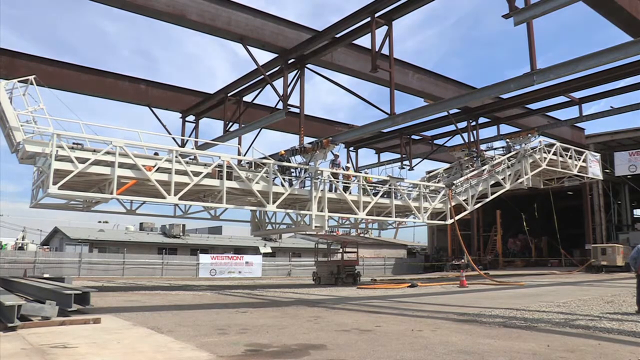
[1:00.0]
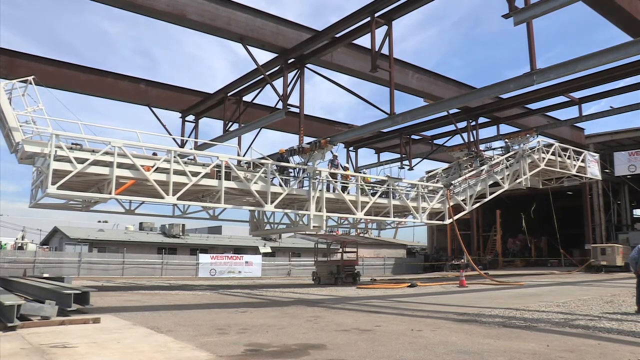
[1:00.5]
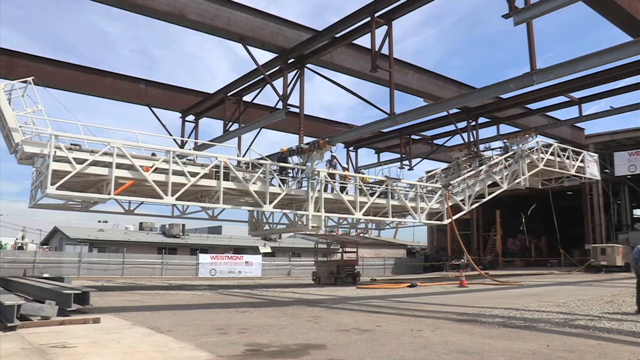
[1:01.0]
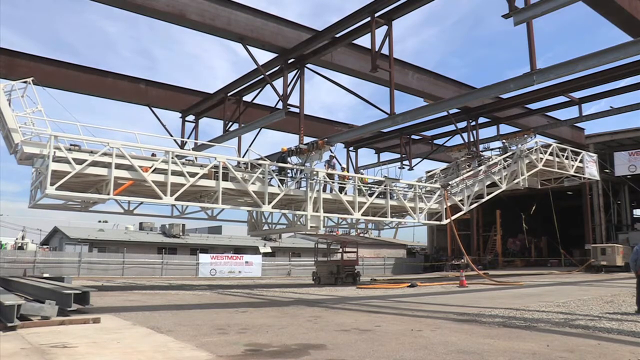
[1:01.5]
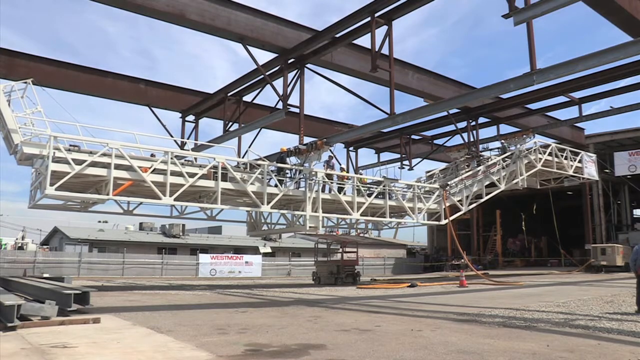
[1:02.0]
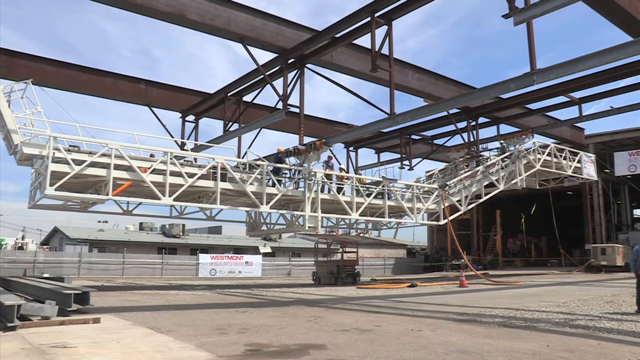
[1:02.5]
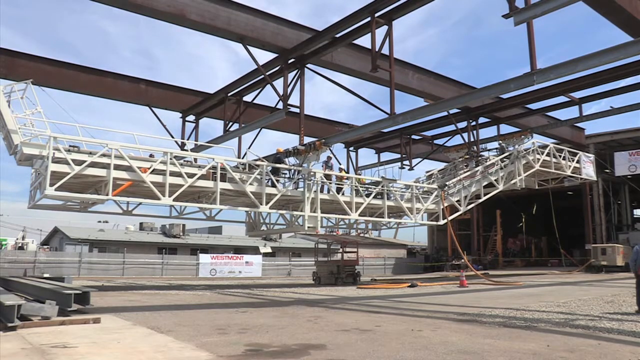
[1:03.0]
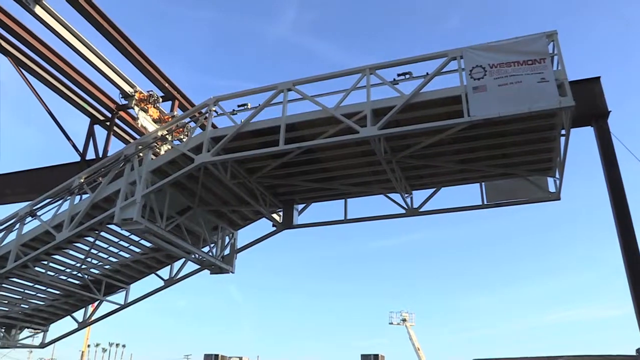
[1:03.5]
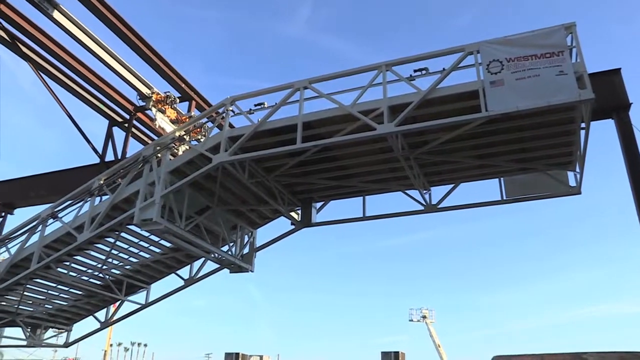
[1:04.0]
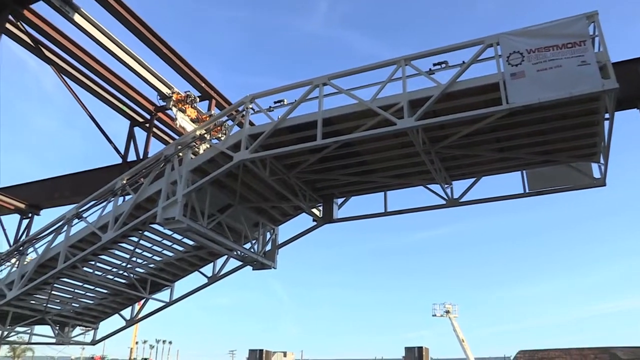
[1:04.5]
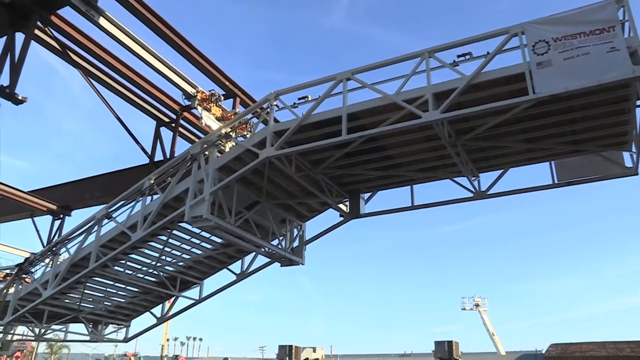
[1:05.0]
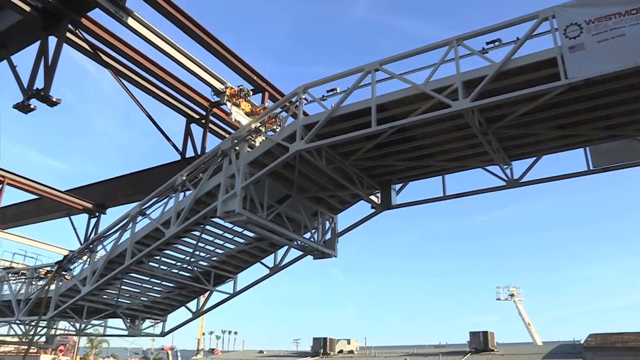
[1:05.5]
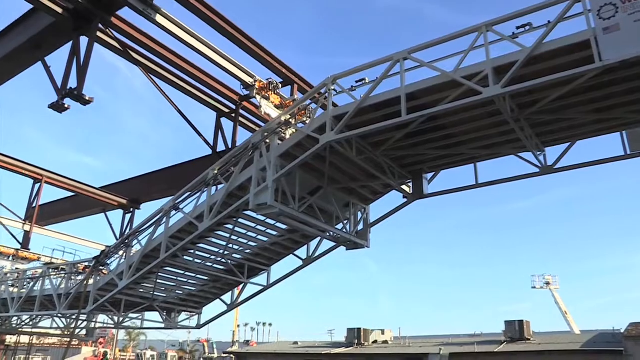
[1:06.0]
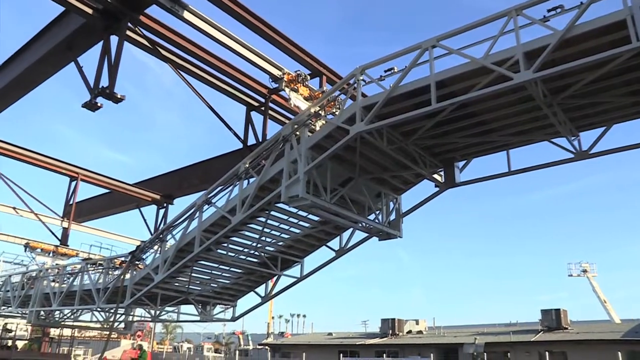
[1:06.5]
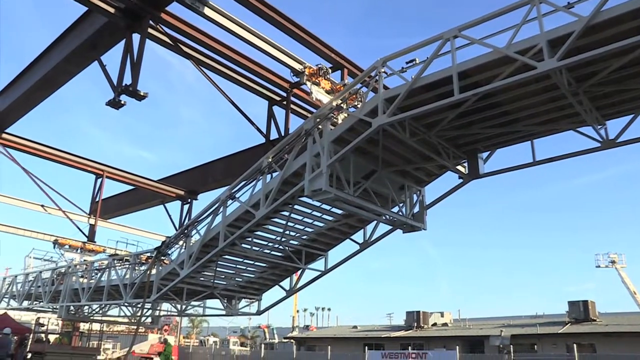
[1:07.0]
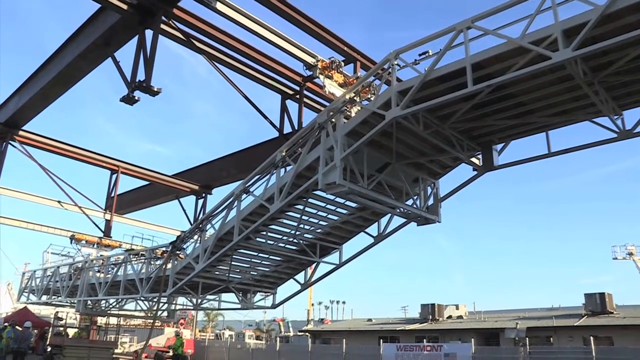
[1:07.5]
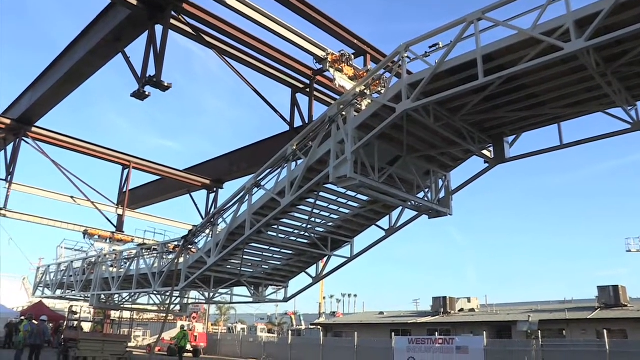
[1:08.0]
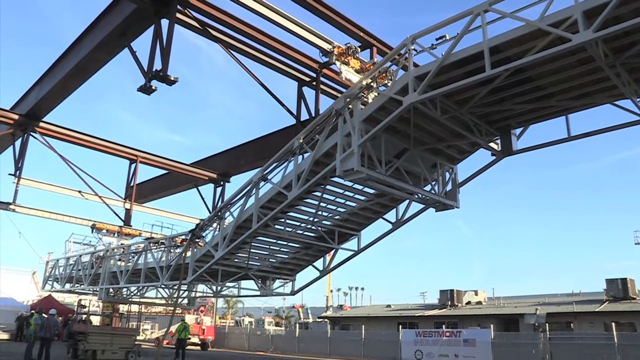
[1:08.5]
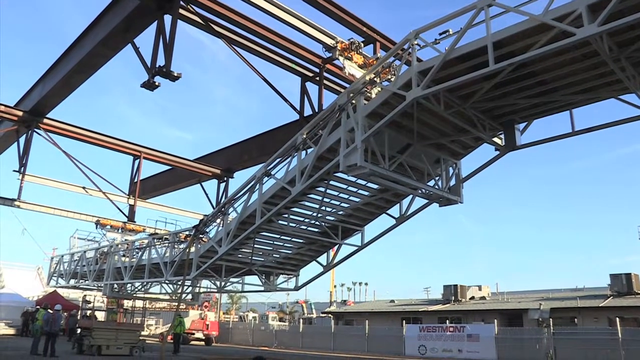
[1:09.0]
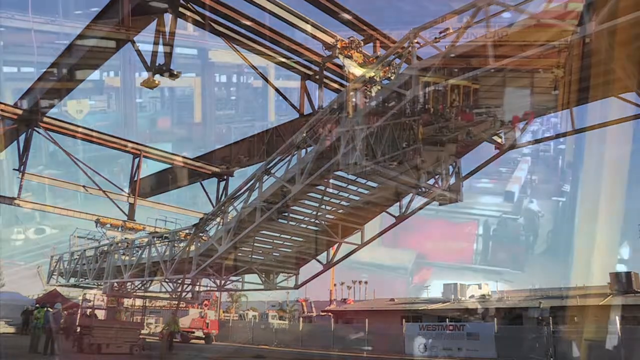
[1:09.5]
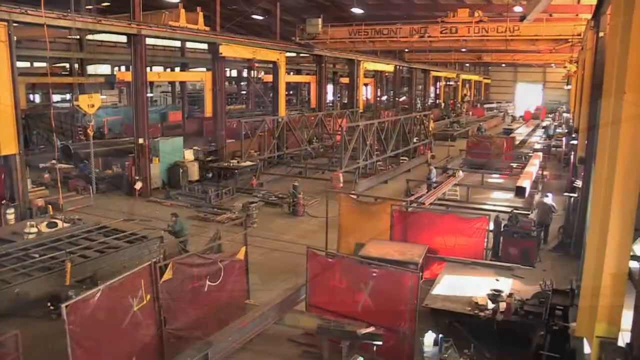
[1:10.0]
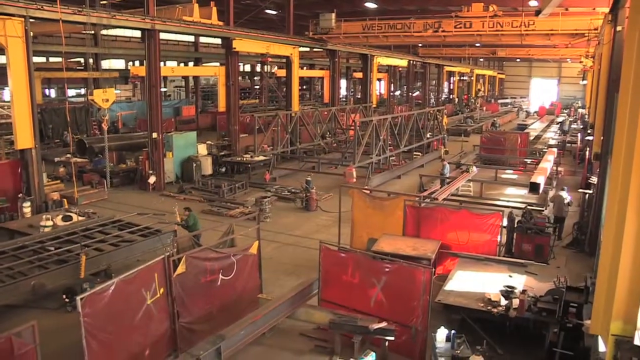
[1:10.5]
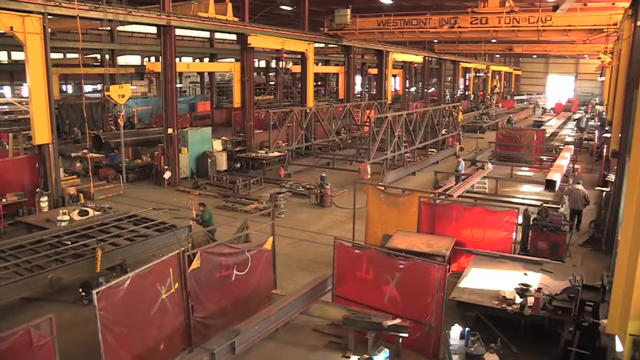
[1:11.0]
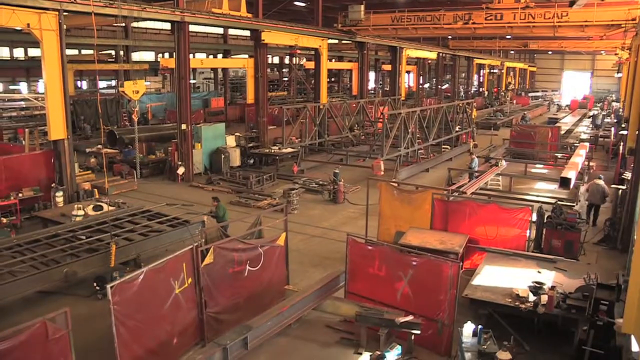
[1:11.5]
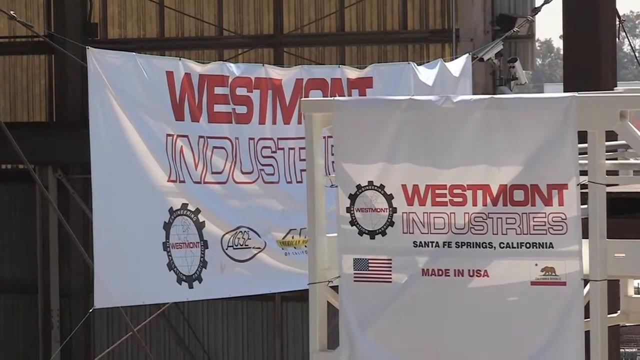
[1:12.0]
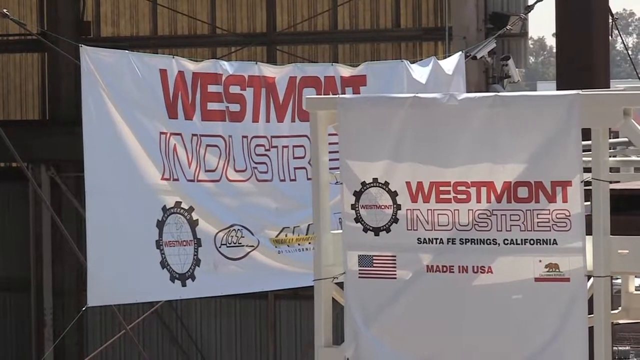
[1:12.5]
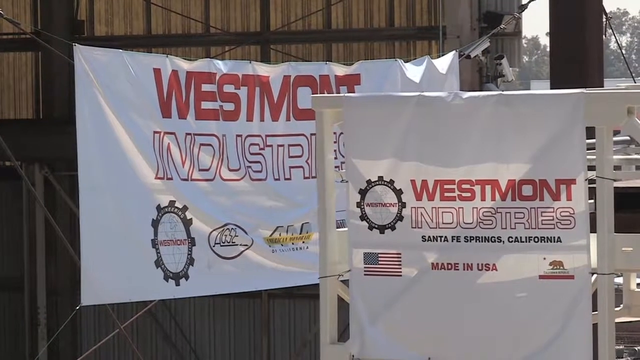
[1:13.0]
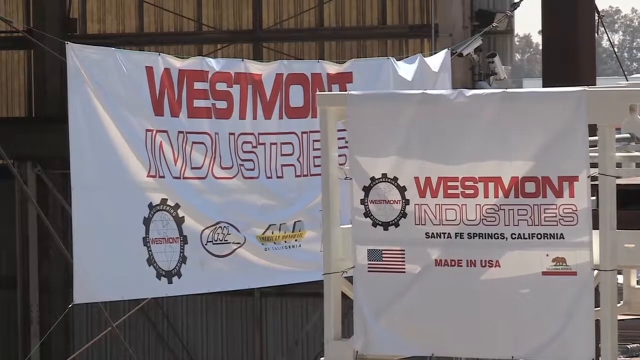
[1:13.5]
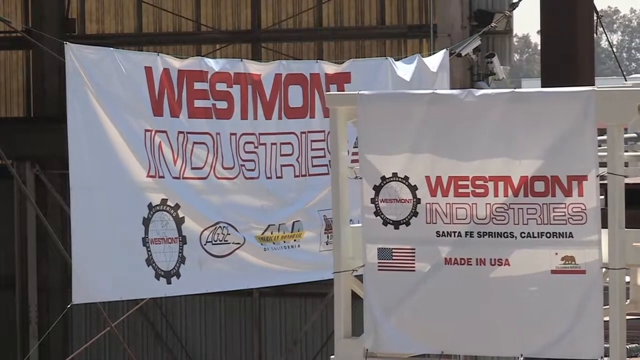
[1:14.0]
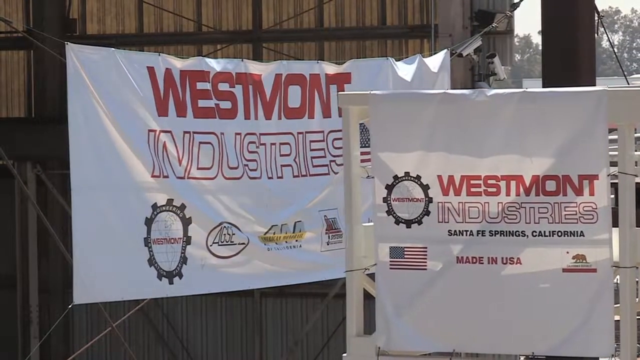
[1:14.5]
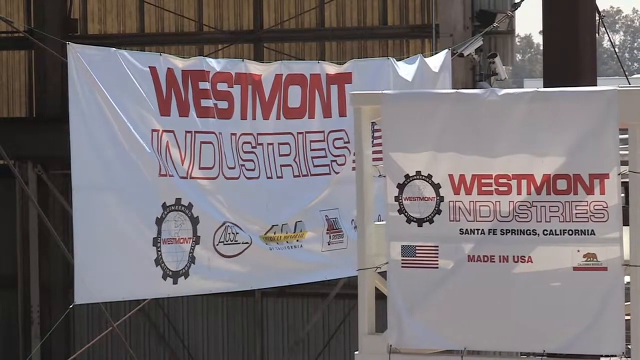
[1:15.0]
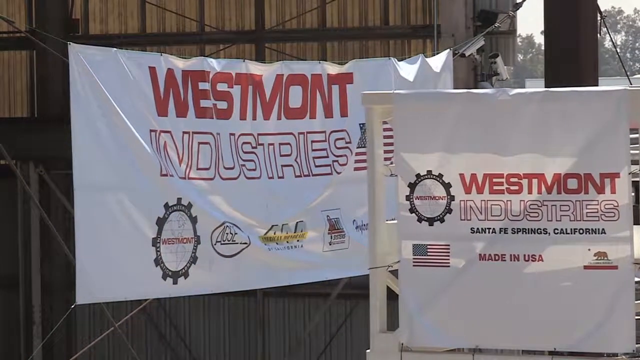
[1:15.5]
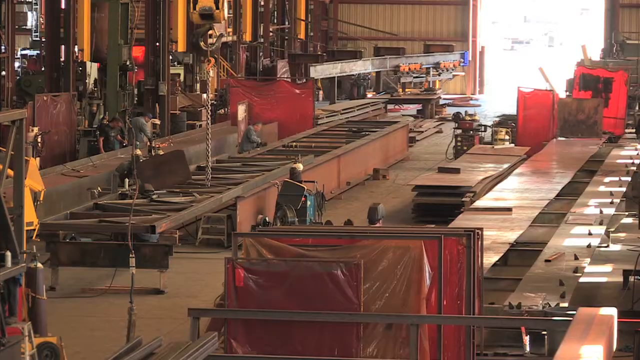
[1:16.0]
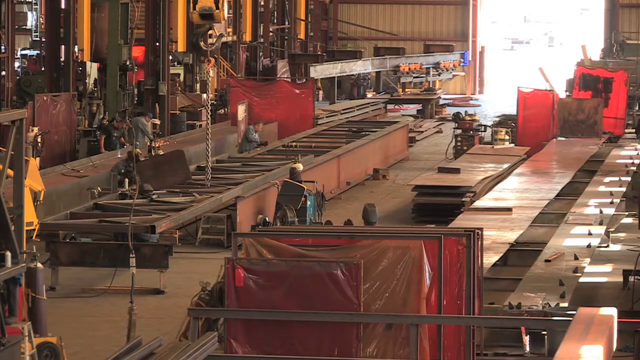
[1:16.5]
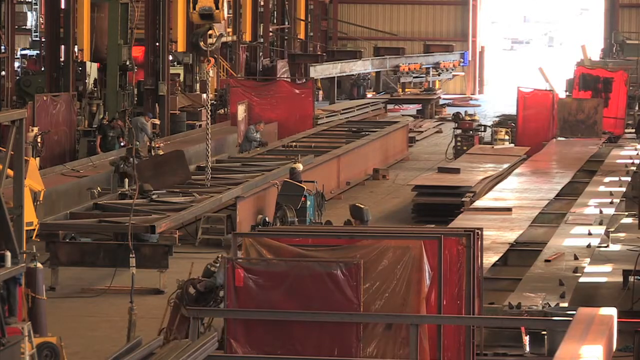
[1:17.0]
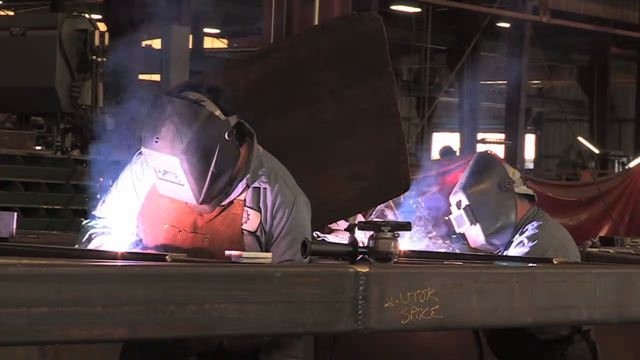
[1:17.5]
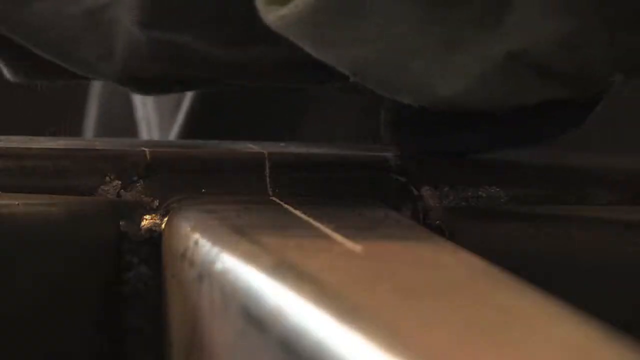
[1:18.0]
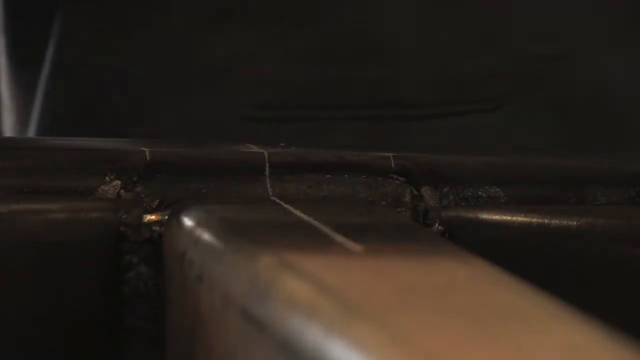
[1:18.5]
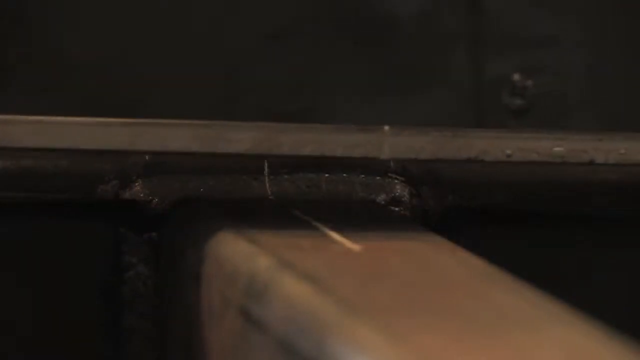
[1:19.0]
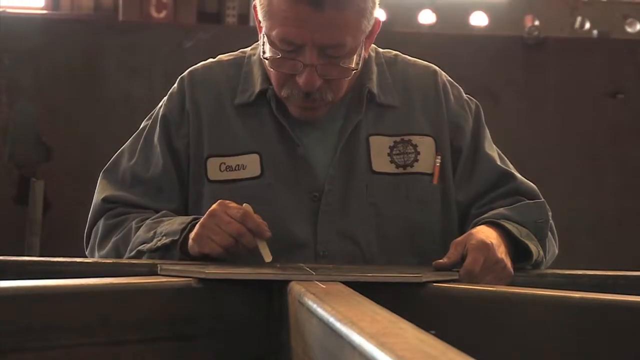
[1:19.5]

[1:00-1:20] Construction workers are on a sort of white beam that slowly moves back and forth. The scene transitions to another beam platform with no construction workers on it, as the camera pans slowly to the left to show more of the construction scene, including something almost like stairs and beams overhead. The scene shifts inside some sort of factory or refinery, seen in a sort of overhead view, where workers are working on different items, with a lot of red and yellow coloring. Back outside, a couple of signs say "Westmont Industries Santa Fe Springs, California" and "made in the USA", with an American flag to the left. Behind the main sign is a sort of plastic banner with Westmont Industries, some different logos and what may be awards at the bottom, partly blocked by the first sign. Inside the warehouse or building, workers work on different things; welders wearing masks work on something, with sparks lighting up in front of them. A close-up shows a machine working. A man named Caesar wears glasses and a sort of gray work outfit, with a pencil tucked in the pocket; a logo seems to be on his right-hand side and his name tag on his left-hand side. He has a mustache, looks down, holds what almost looks like a popsicle stick, and looks intently at the machine. The scene cuts to more men holding onto a silver beam.